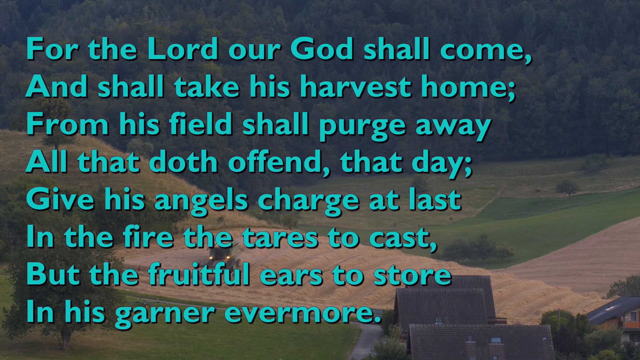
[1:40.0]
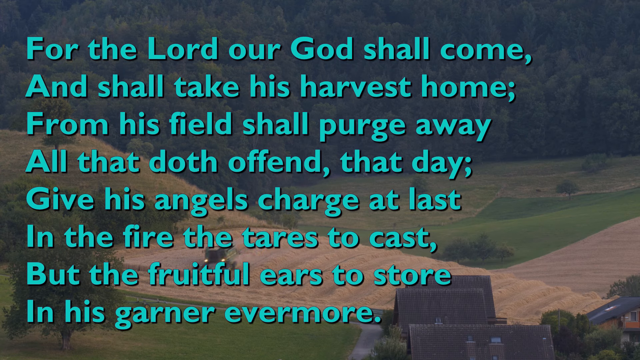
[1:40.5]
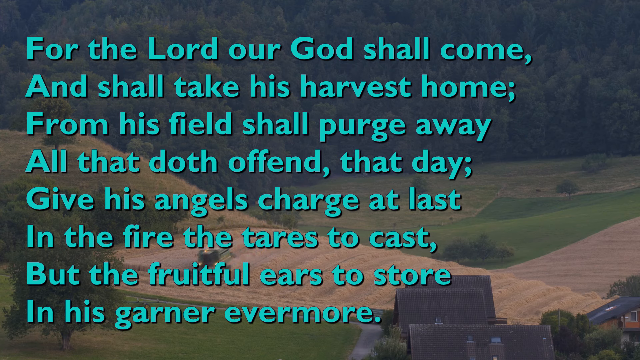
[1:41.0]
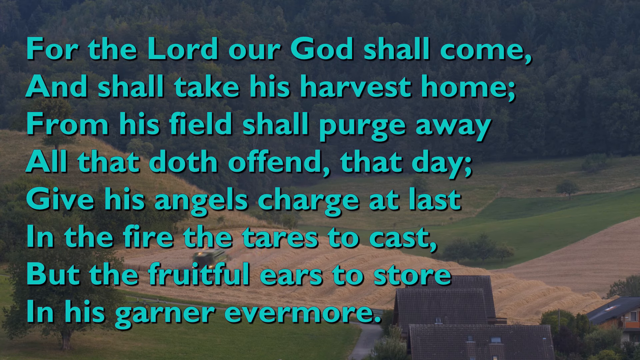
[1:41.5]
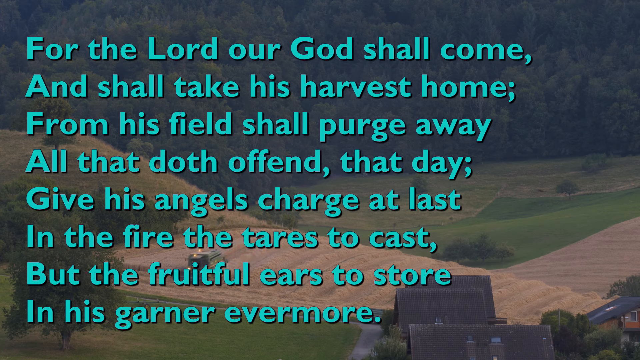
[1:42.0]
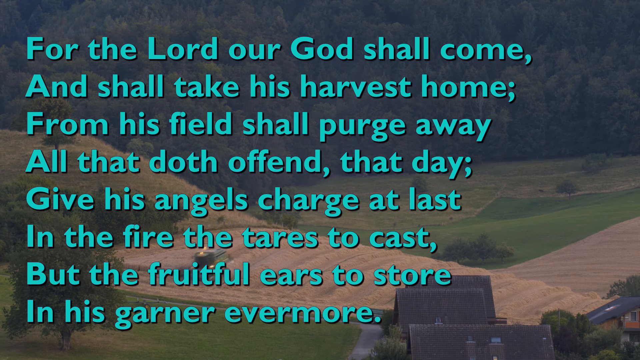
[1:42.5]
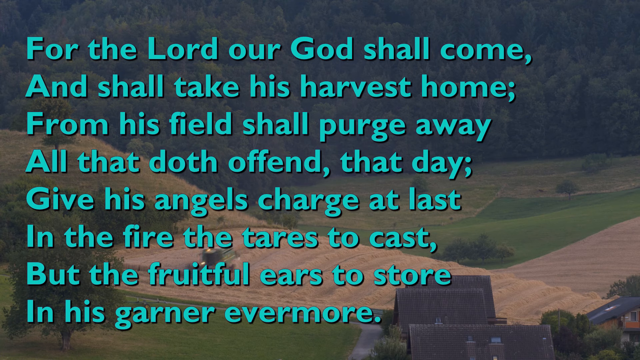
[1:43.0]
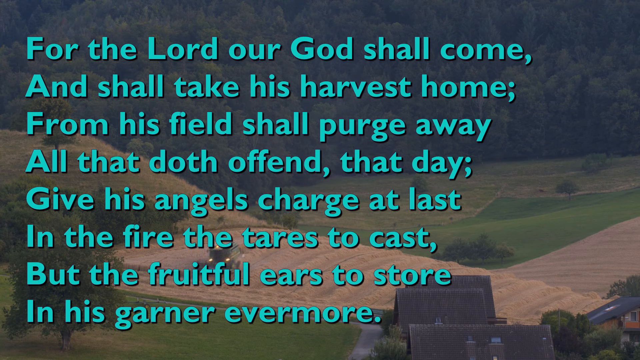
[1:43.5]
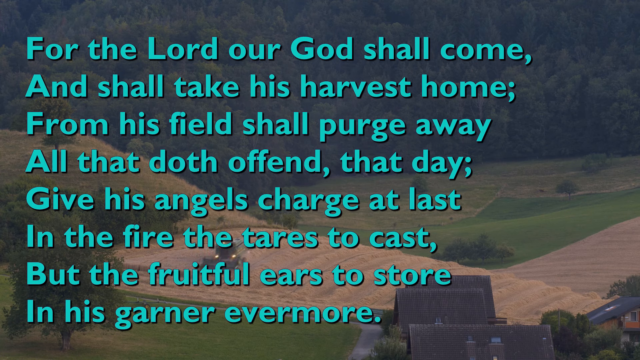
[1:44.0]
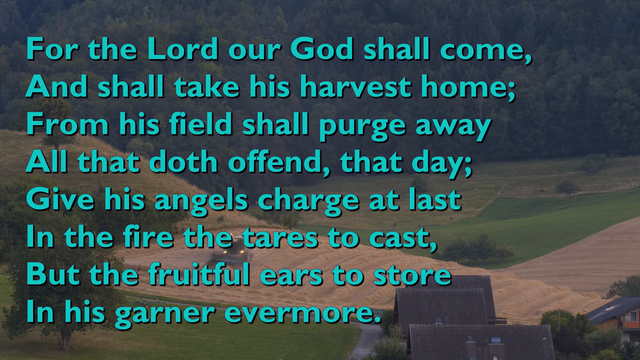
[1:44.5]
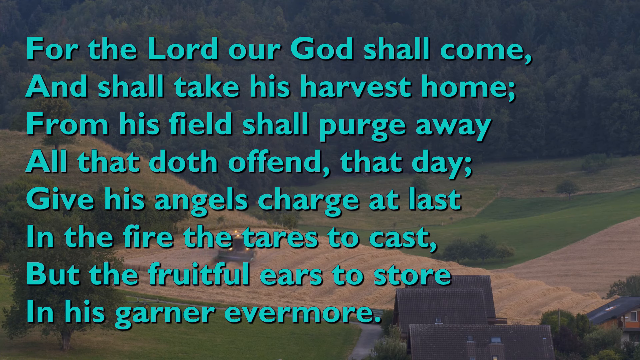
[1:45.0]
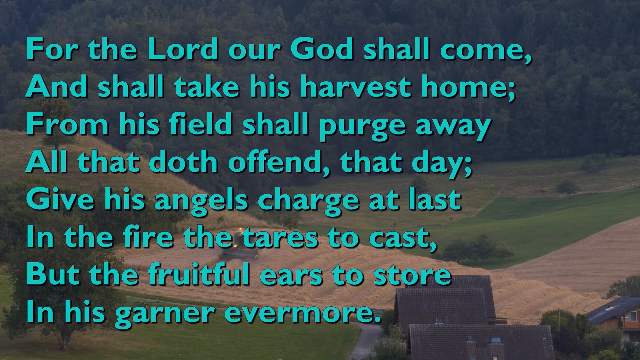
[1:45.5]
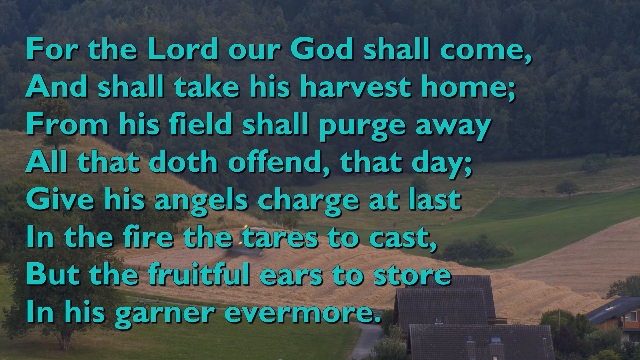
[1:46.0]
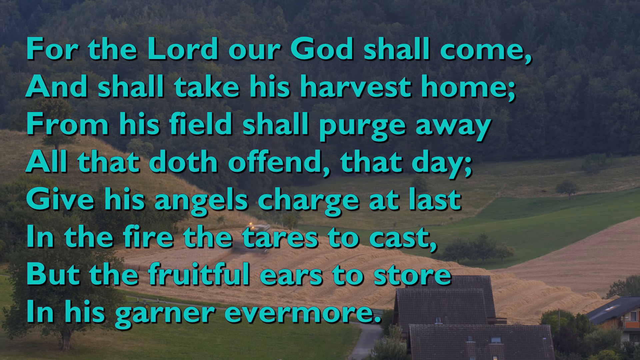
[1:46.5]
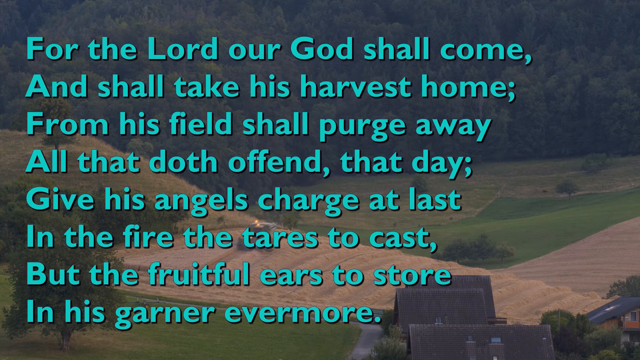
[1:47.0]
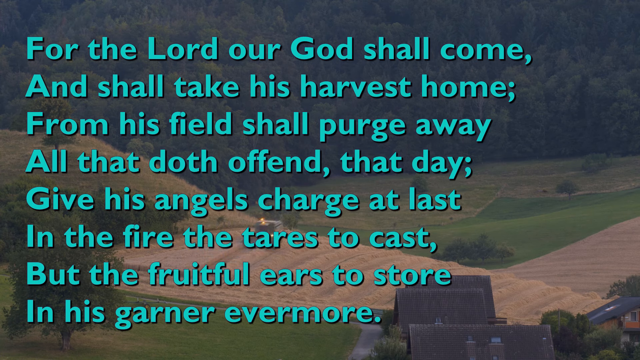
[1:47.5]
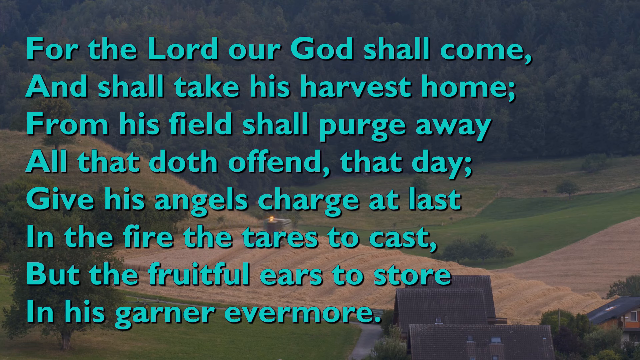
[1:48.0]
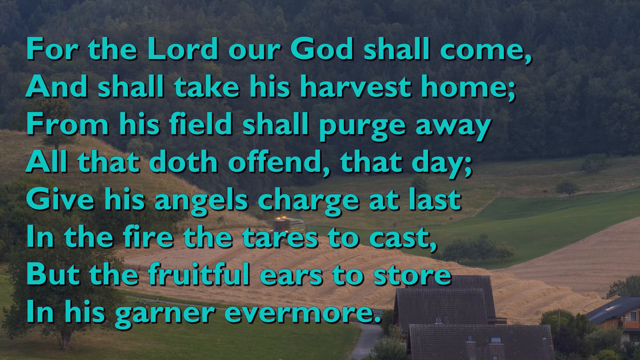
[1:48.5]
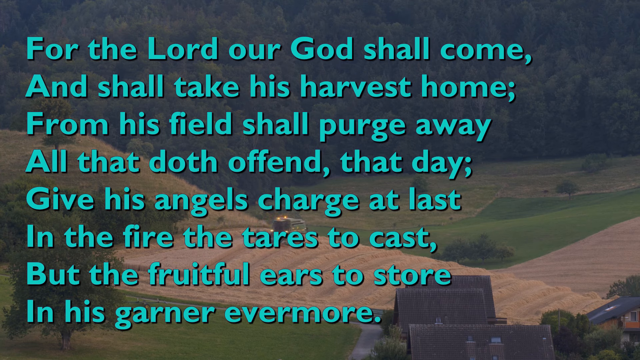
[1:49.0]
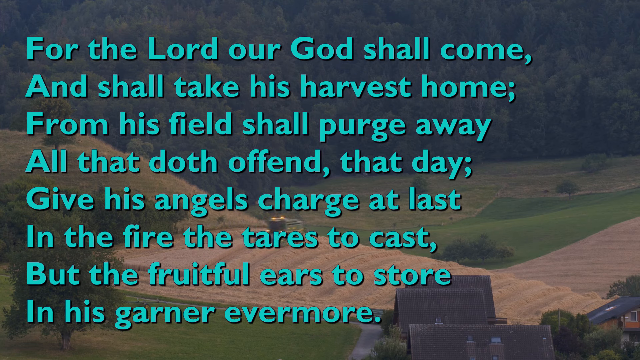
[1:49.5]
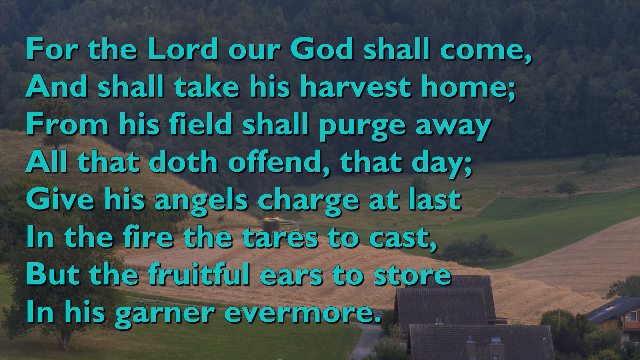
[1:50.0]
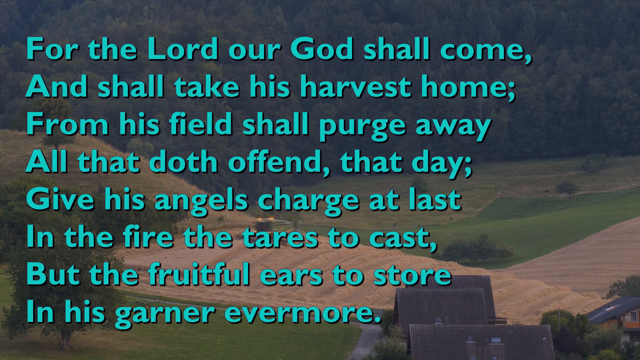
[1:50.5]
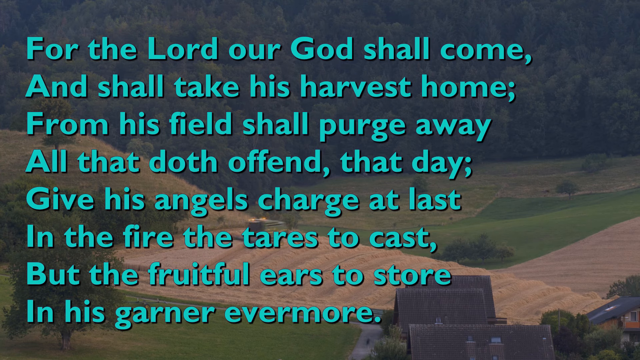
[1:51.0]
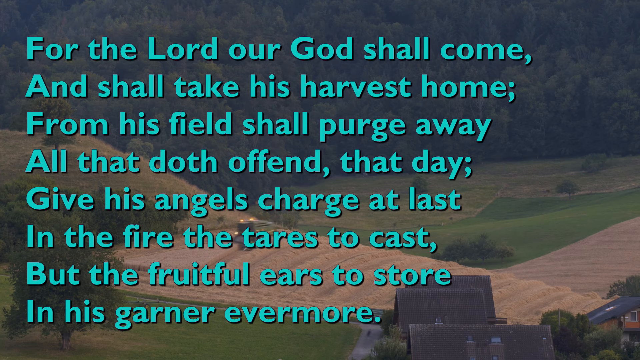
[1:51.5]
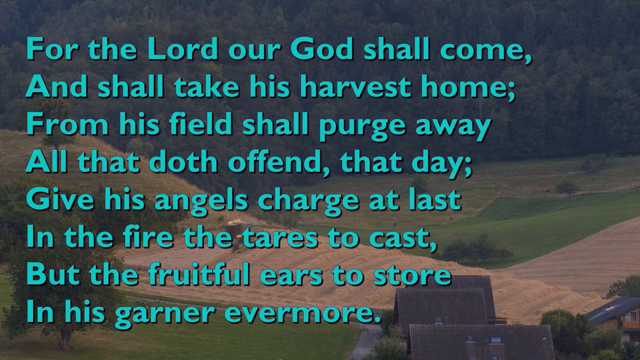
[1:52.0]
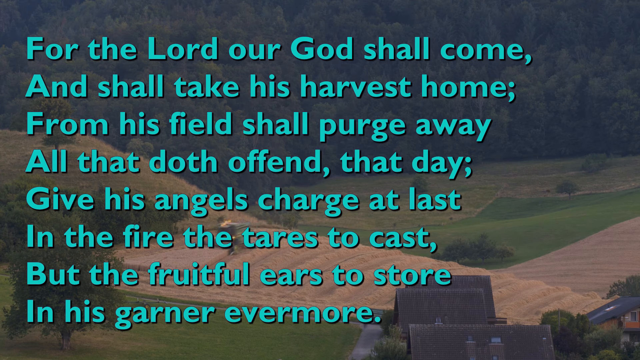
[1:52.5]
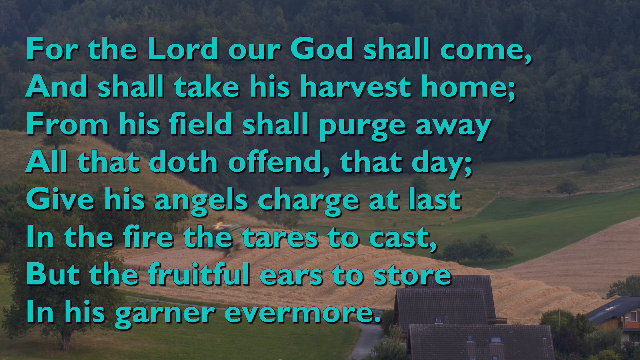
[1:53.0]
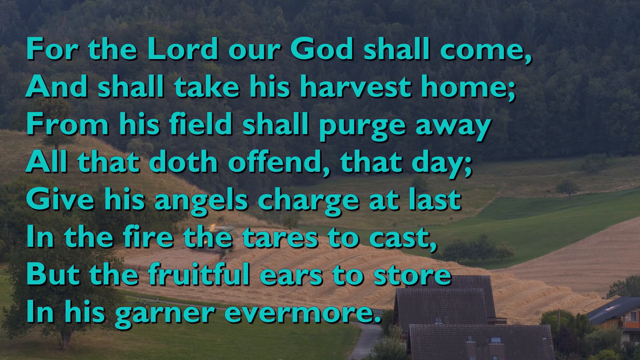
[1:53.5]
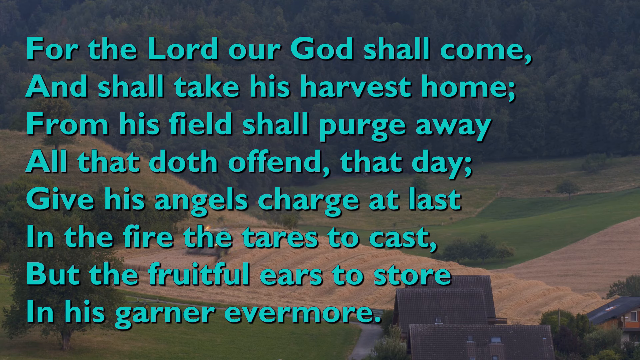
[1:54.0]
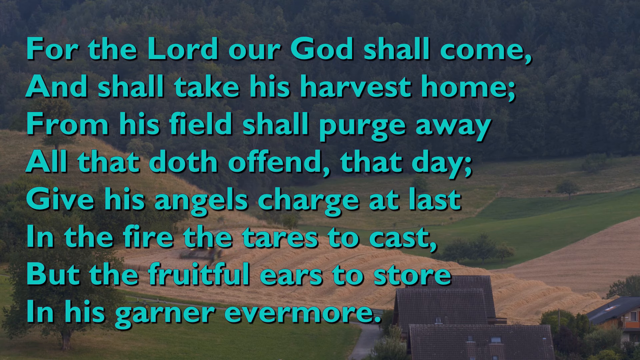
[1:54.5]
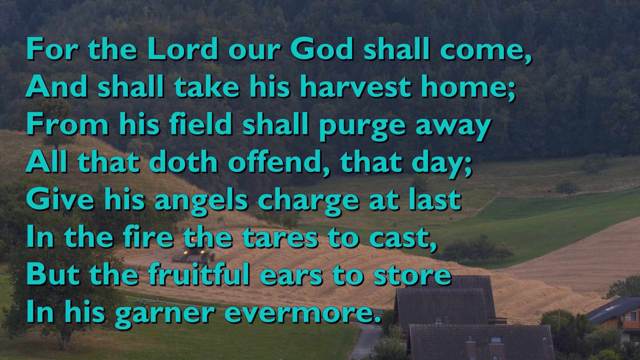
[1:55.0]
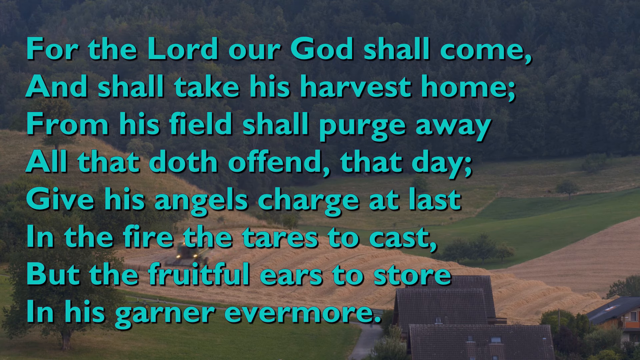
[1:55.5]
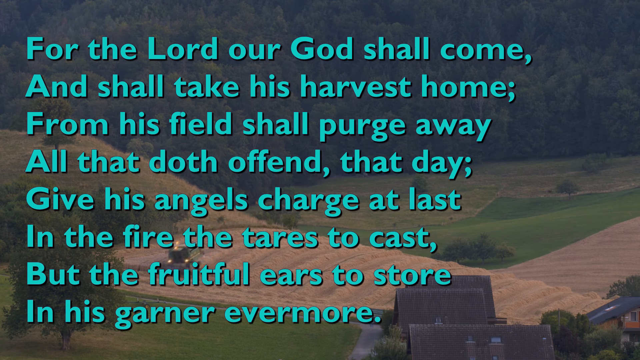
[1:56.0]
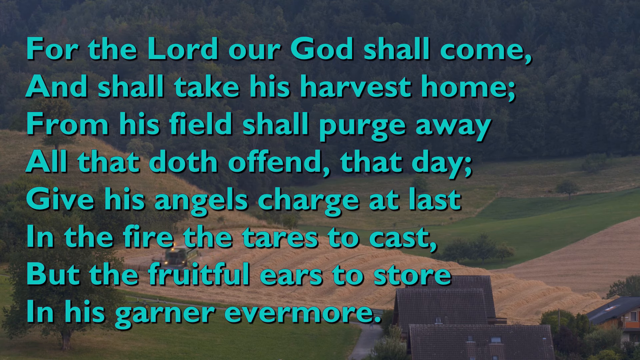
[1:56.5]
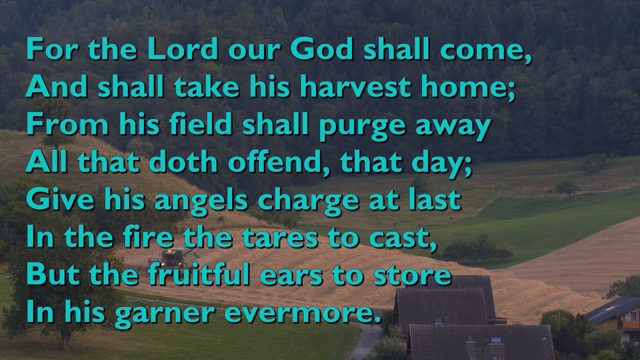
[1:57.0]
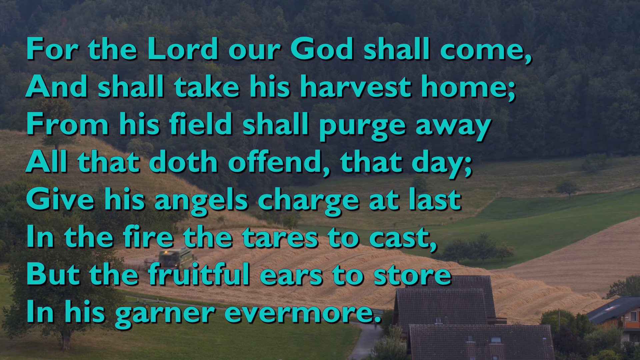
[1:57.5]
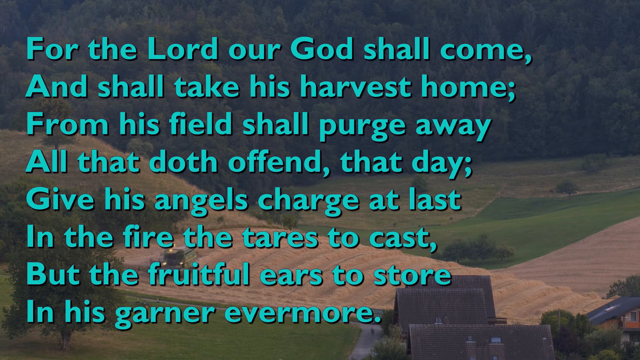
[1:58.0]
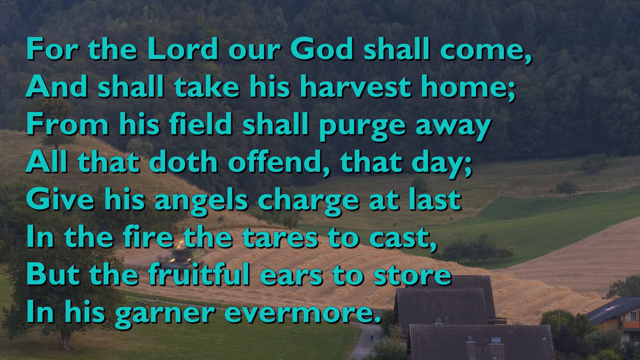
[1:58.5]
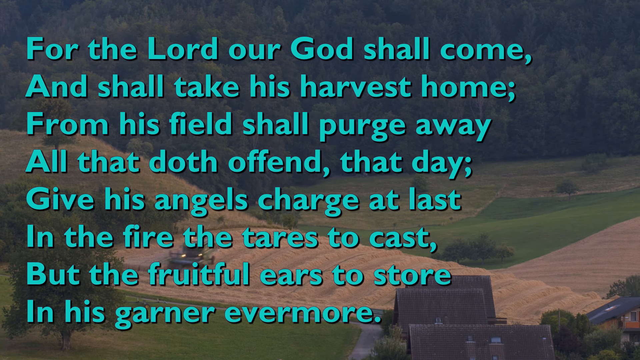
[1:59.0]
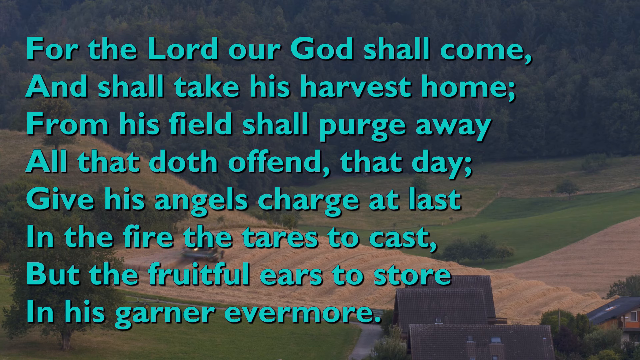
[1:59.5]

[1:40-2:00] In the bottom right-hand corner of the screen are the rooftops of two small houses. In front of them is a light tan wheat field, where a small green truck is cutting down the wheat in layers. Past the wheat field is a dark green, perfectly manicured lawn, then more land of mixed brown and green that does not look well manicured, and beyond that nothing but woods of tall green evergreen trees. A grassy hill has one solitary tree on top of it. Across the screen the text reads: "For the Lord our God shall come and shall take his harvest home from this field shall purge away all that doth offend that day give his angels charge at last in the fire the tares to cast" and continues "the fruitful ears to store in his garner evermore."